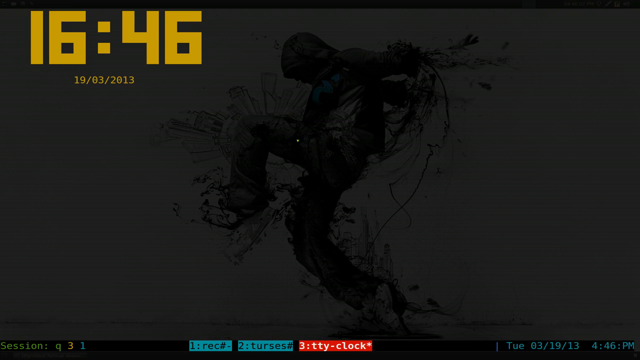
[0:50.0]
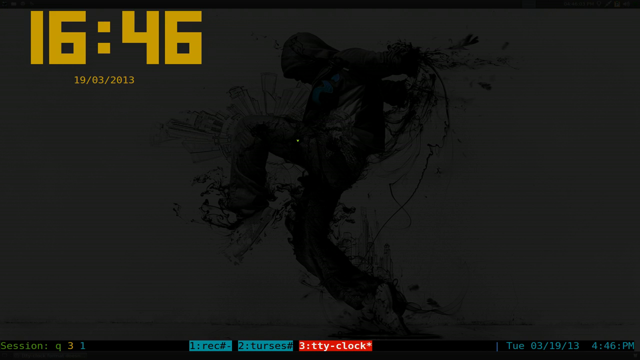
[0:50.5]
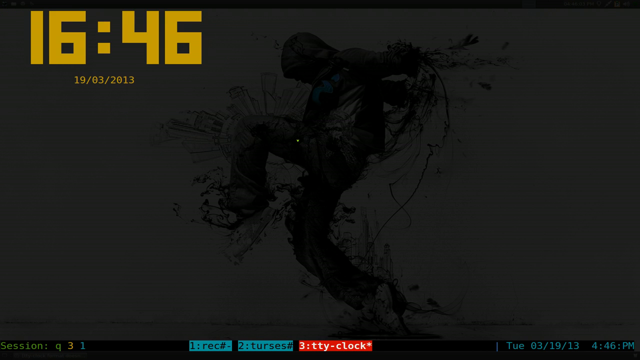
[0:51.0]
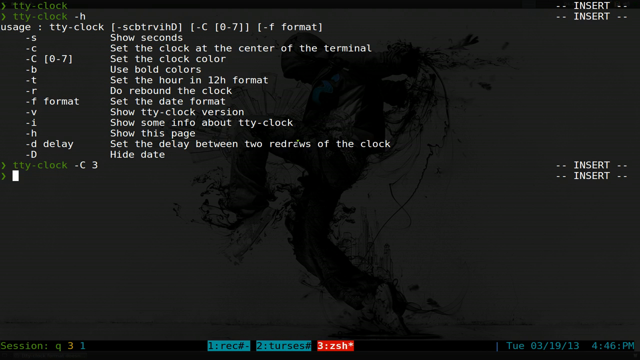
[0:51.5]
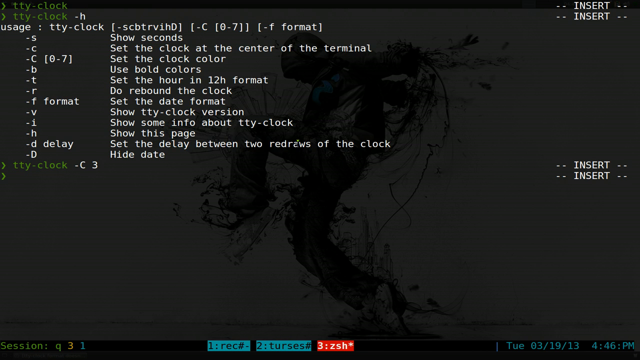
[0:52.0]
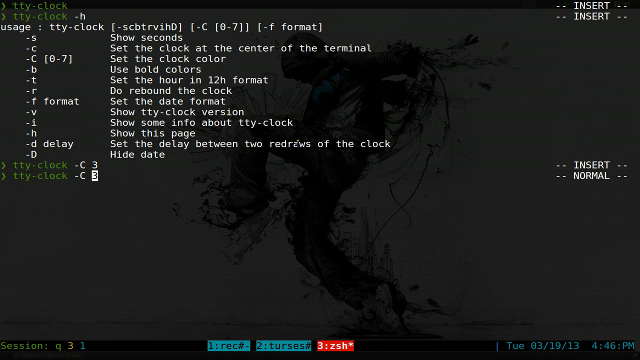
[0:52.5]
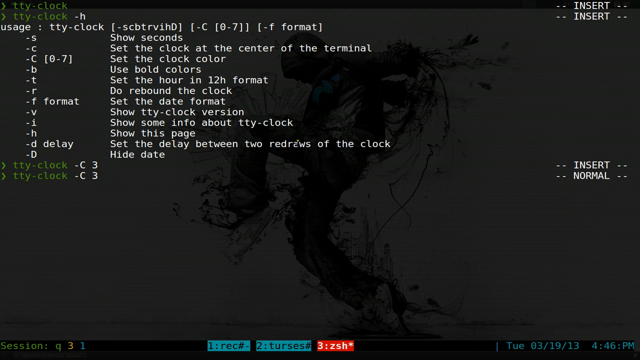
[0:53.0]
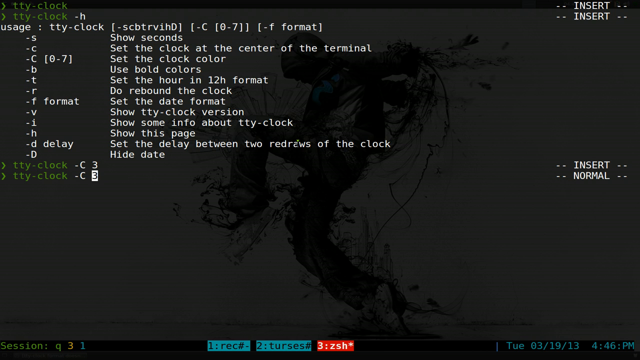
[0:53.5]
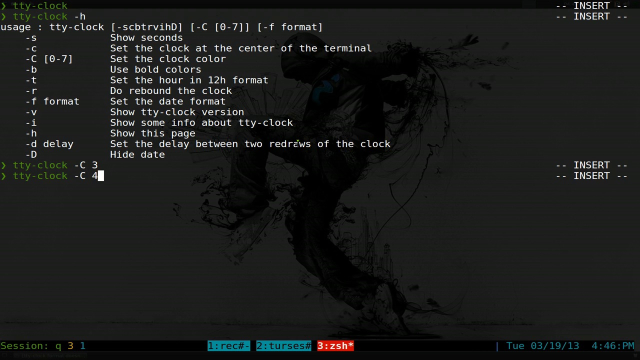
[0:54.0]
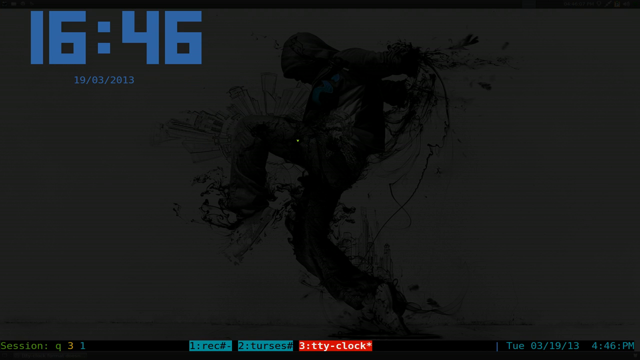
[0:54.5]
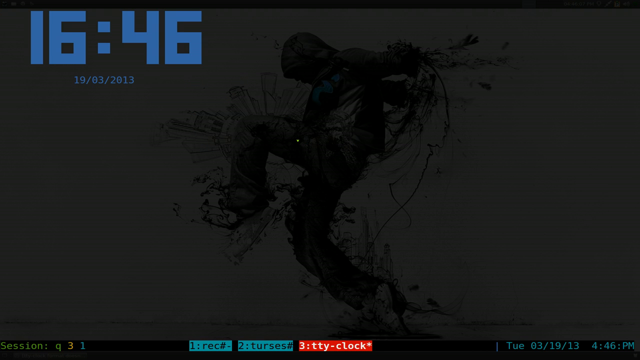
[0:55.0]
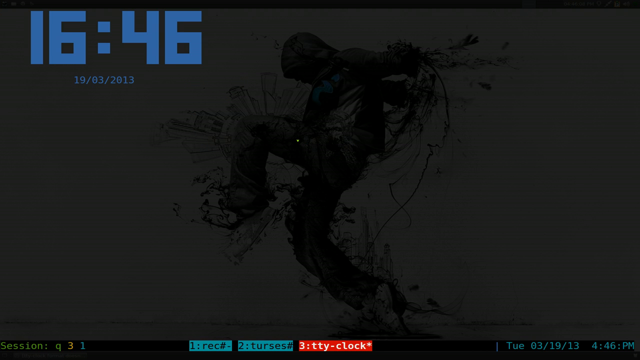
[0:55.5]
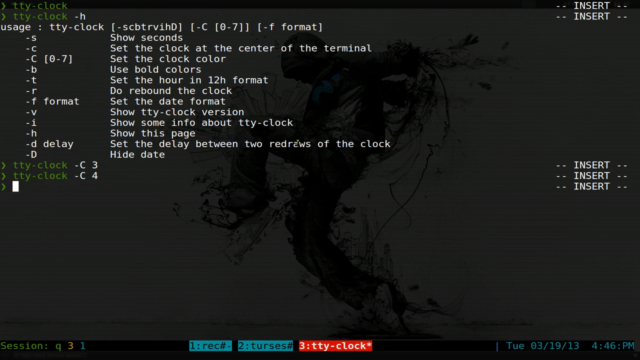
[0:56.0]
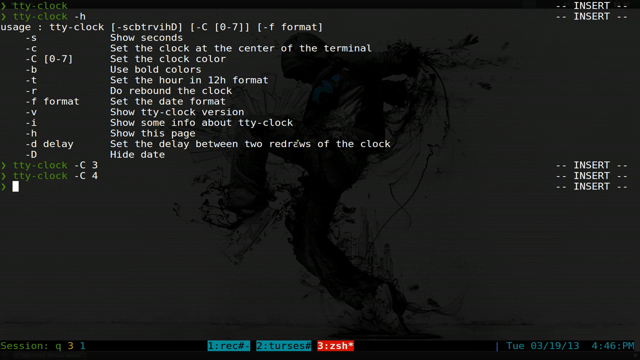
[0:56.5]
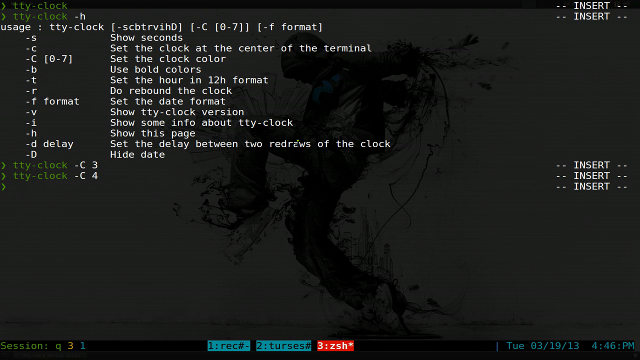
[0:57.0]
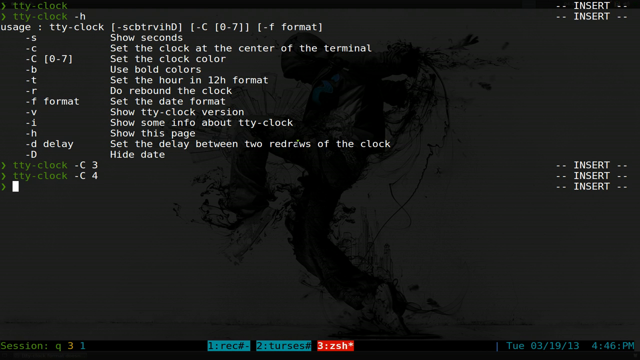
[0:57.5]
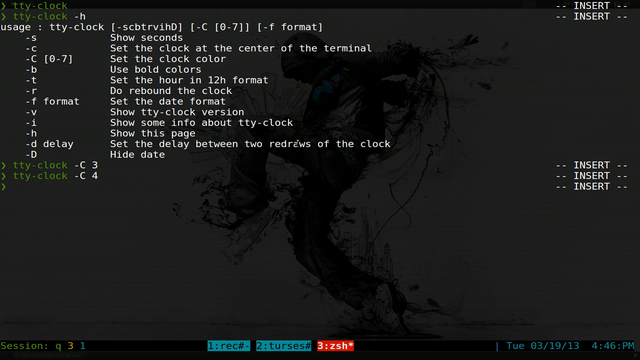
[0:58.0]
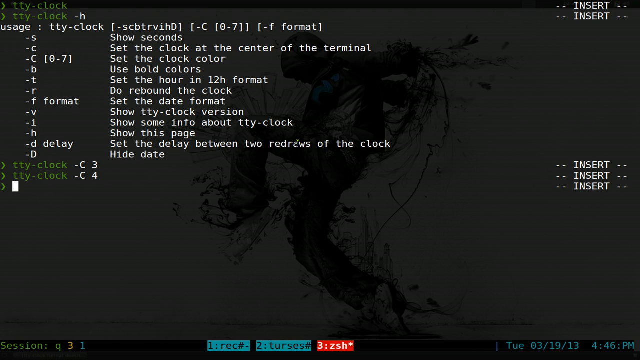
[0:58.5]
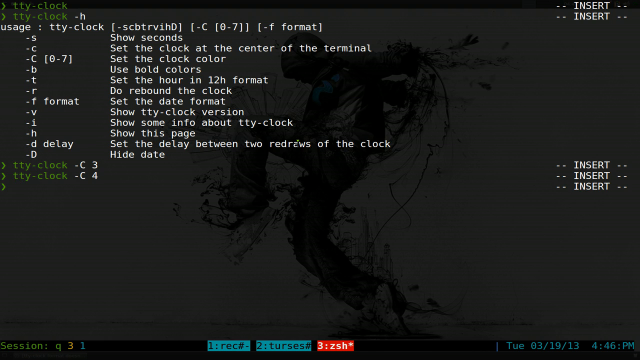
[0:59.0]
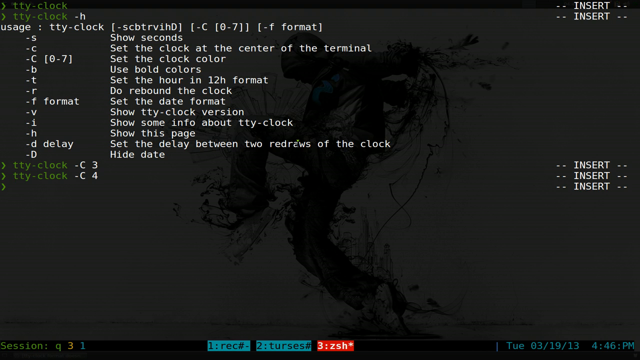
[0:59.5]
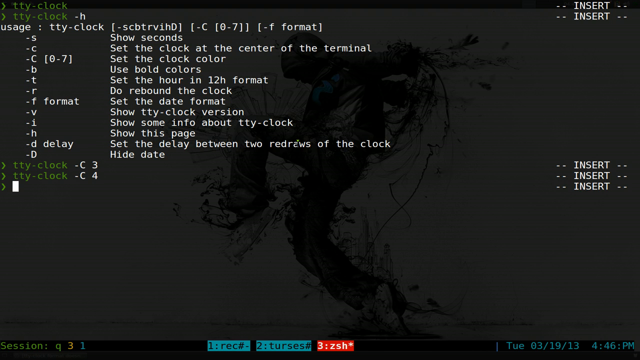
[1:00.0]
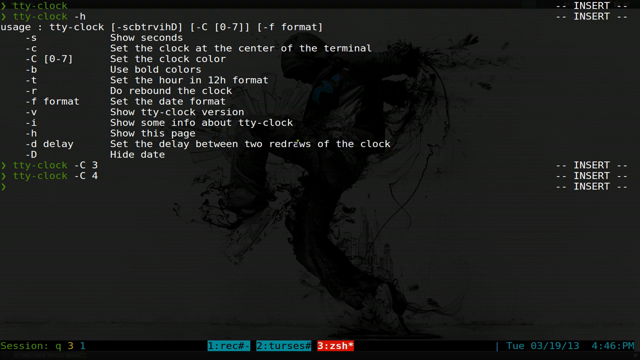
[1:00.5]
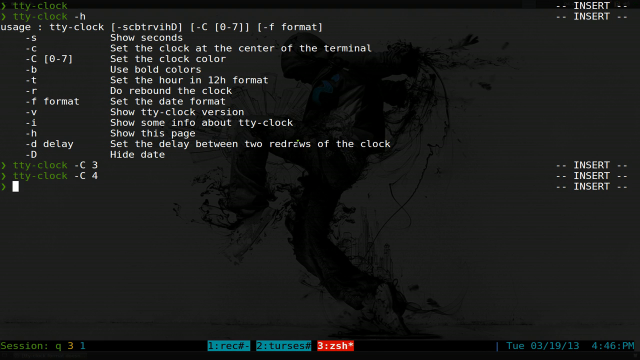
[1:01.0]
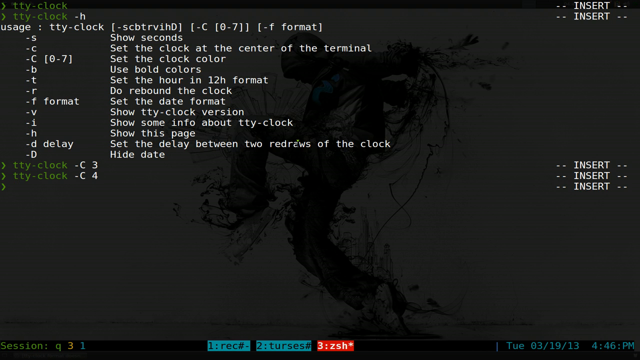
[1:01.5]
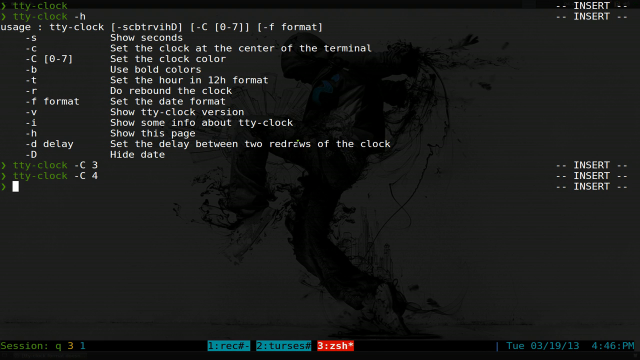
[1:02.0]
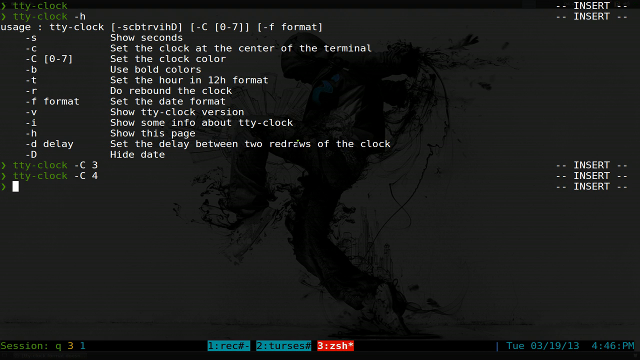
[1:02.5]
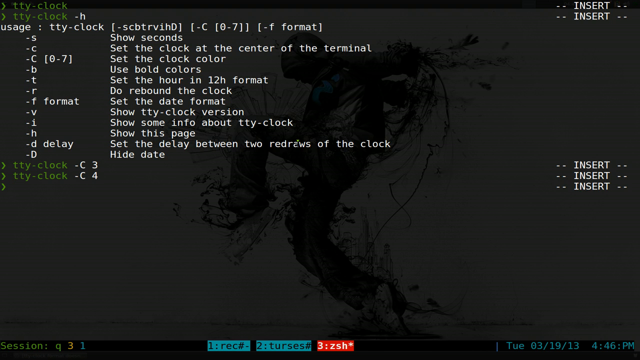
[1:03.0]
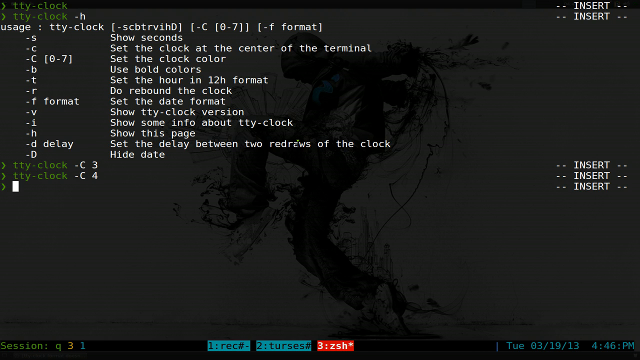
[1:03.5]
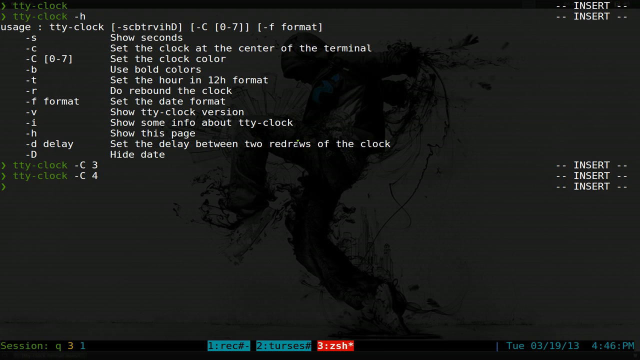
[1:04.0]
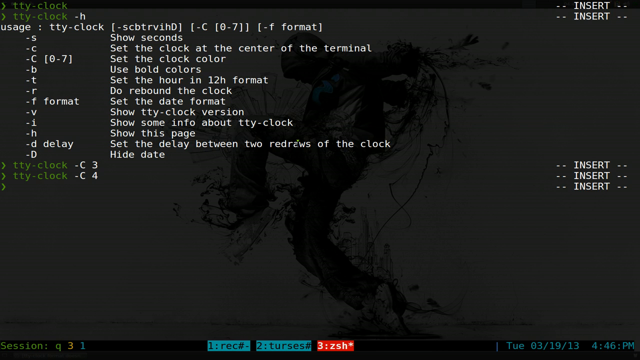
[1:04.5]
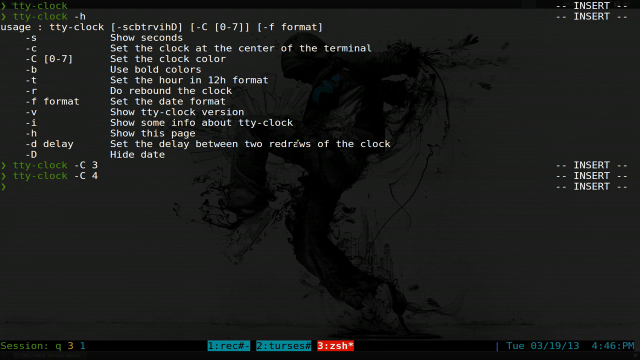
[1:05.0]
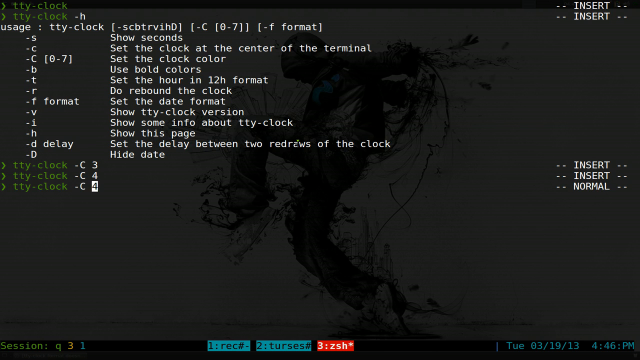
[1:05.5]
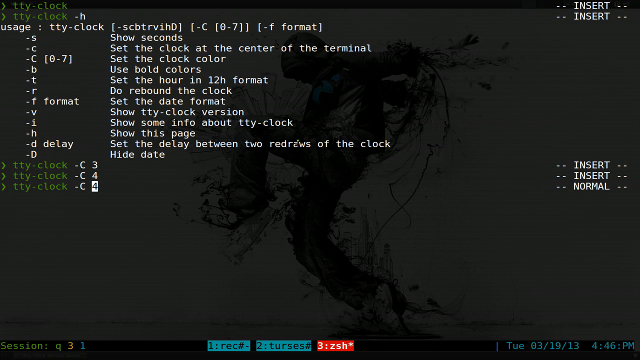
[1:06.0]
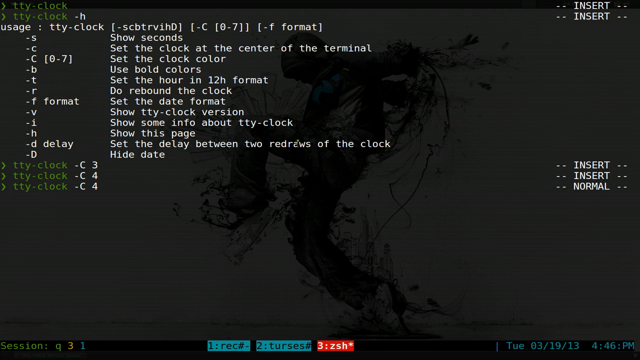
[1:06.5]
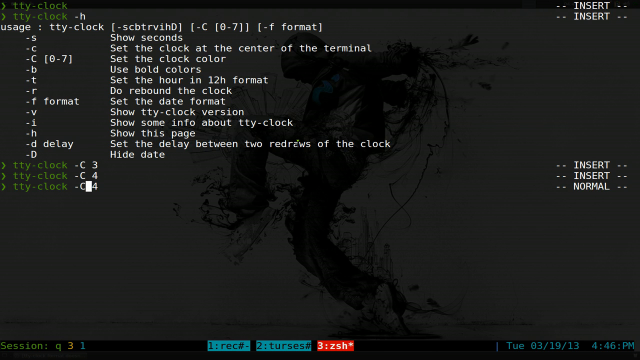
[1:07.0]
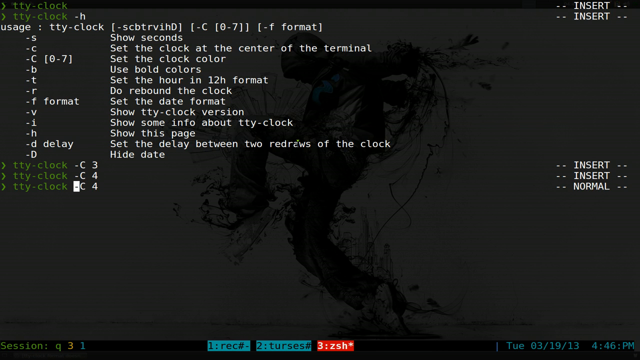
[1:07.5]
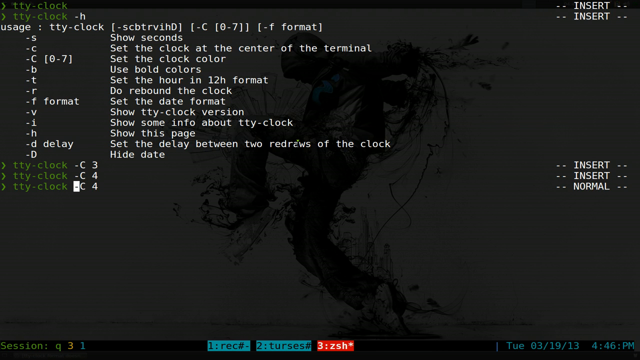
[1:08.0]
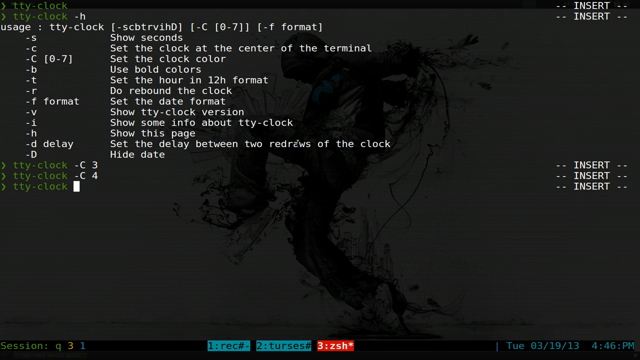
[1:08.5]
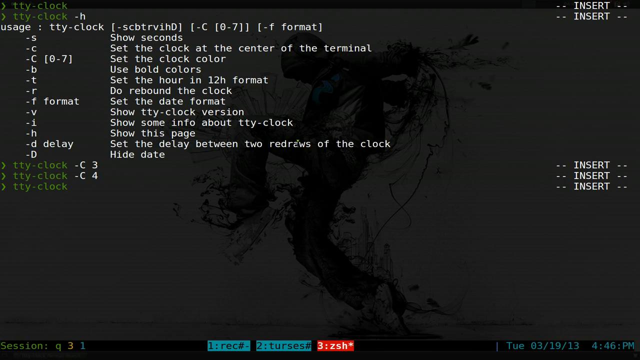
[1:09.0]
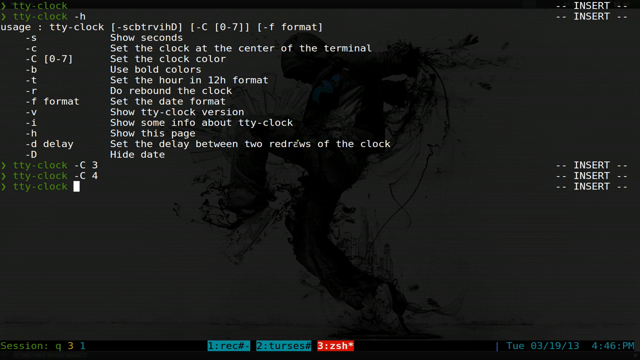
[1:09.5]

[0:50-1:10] On the black command line screen of a computer's operating system, the time and date are written in the upper left in gold text. The time reads "16.46" in large text, and the date reads "19.03.2013" in smaller text. About 12 rows then appear showing different options for using the command tty.clock. Below the rows, the command is written twice: first as "tty.clock -c3", then as "tty.clock -c4". The cursor blinks as if expecting an additional command. In the upper right corner the word "Insert" is written twice, and on the right side of the screen in the middle the same word "Insert" appears three times. The cursor blinks, the words "tty.Clock -C4" appear, and the cursor then backtracks and deletes the "C4".